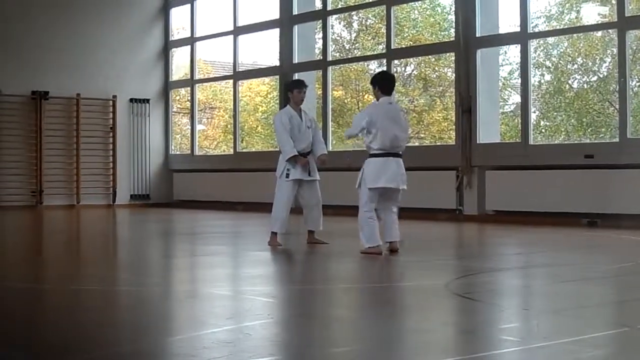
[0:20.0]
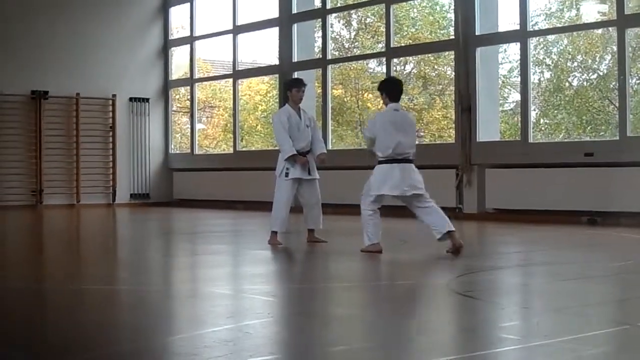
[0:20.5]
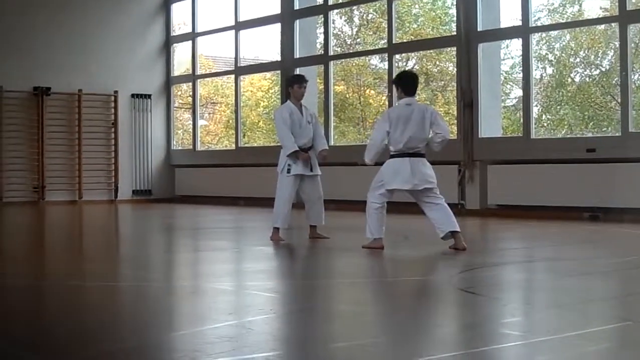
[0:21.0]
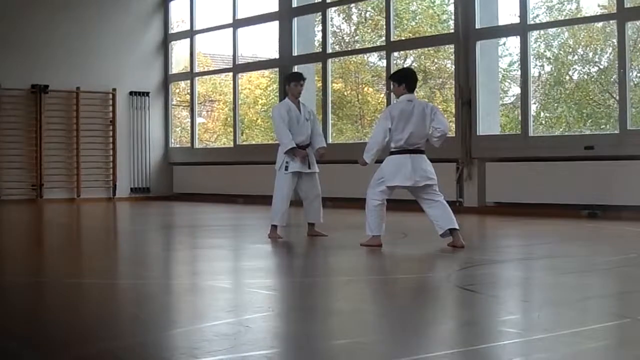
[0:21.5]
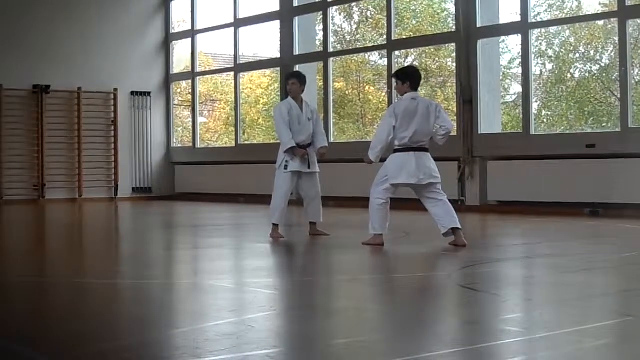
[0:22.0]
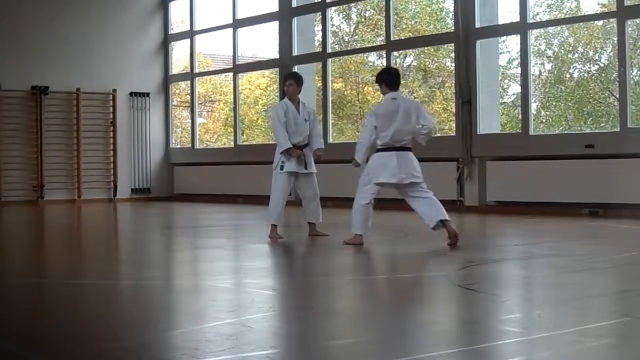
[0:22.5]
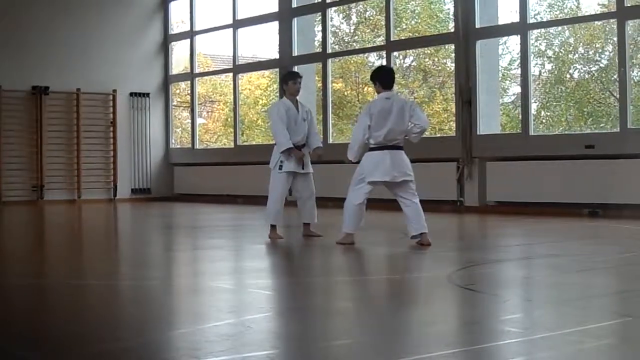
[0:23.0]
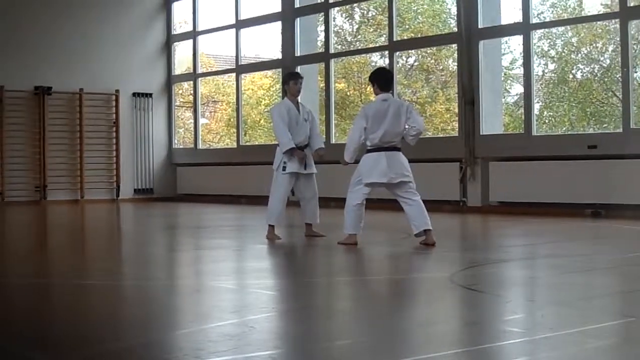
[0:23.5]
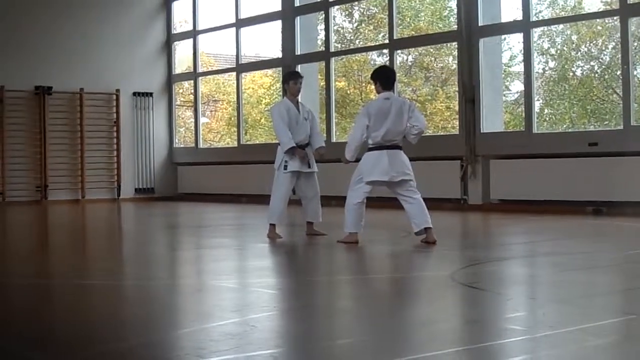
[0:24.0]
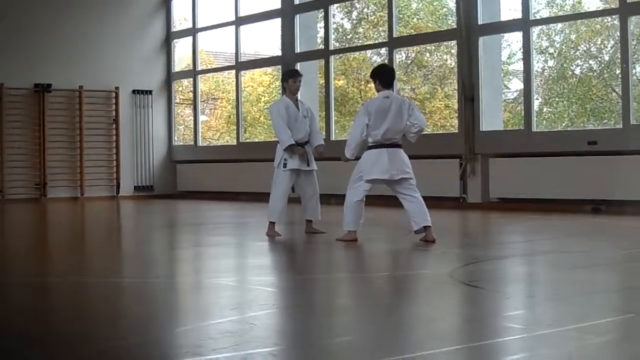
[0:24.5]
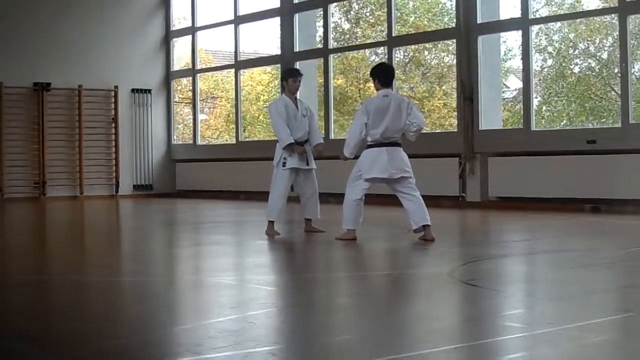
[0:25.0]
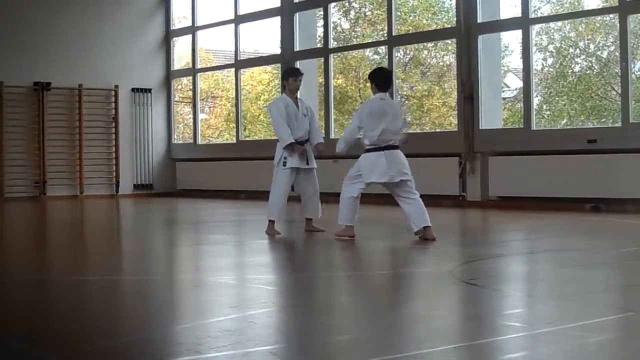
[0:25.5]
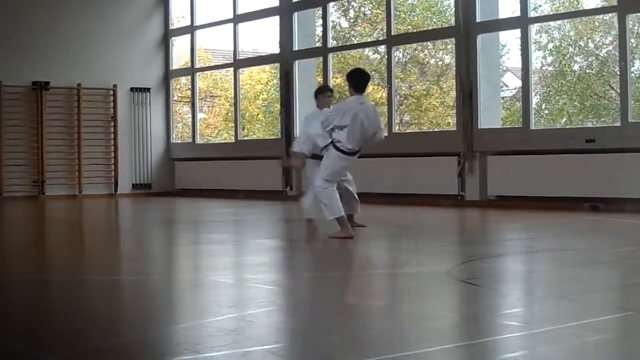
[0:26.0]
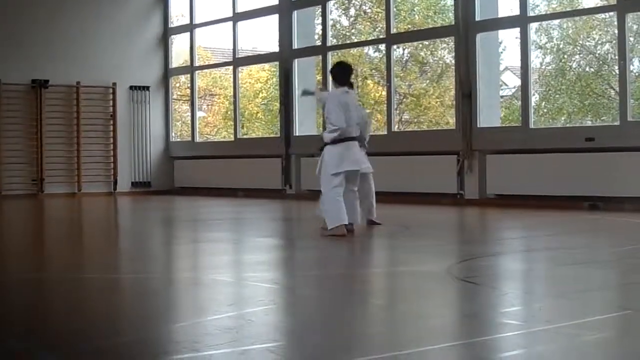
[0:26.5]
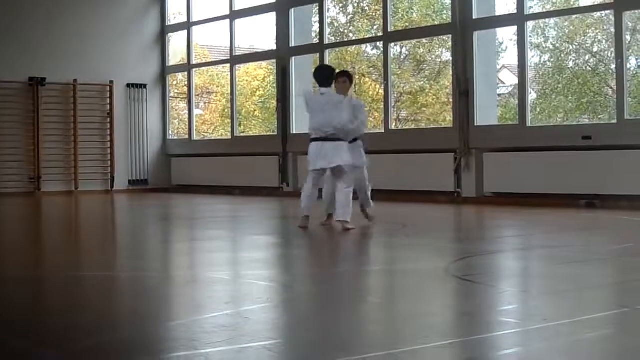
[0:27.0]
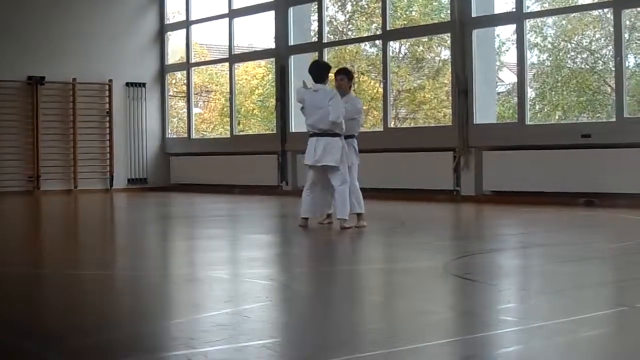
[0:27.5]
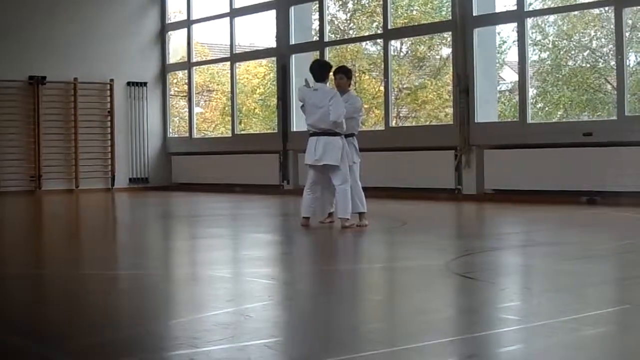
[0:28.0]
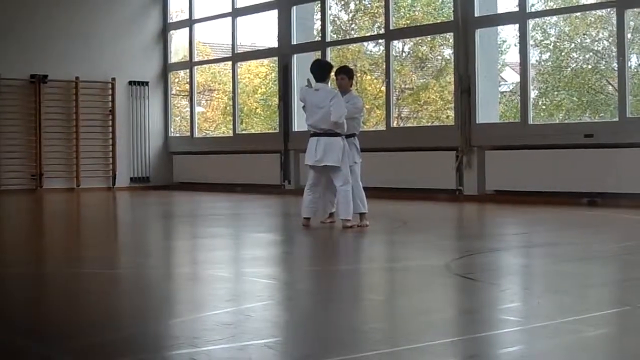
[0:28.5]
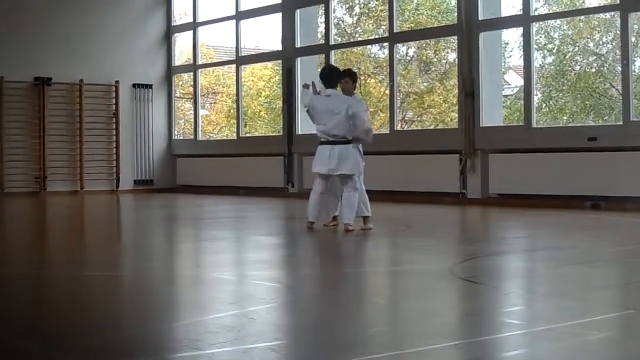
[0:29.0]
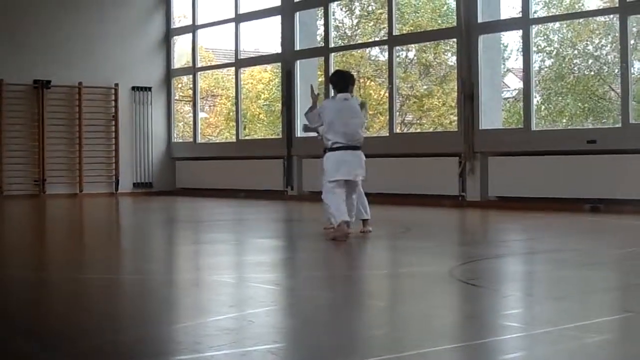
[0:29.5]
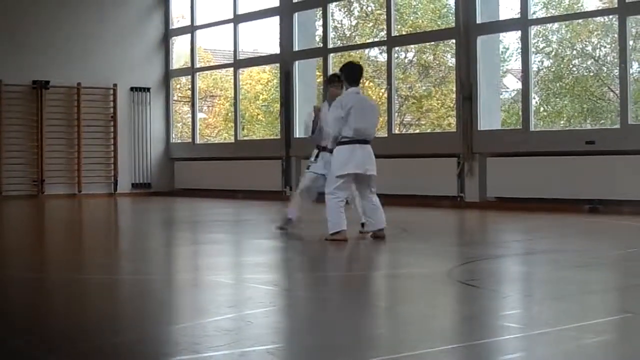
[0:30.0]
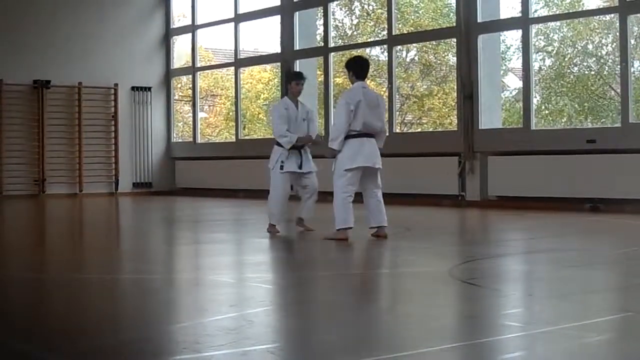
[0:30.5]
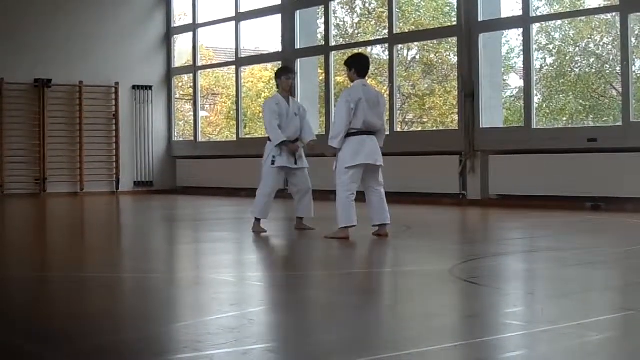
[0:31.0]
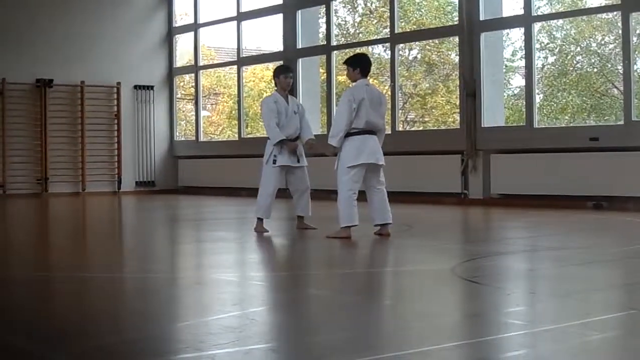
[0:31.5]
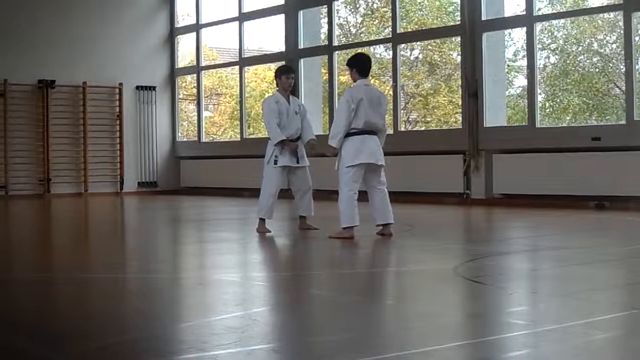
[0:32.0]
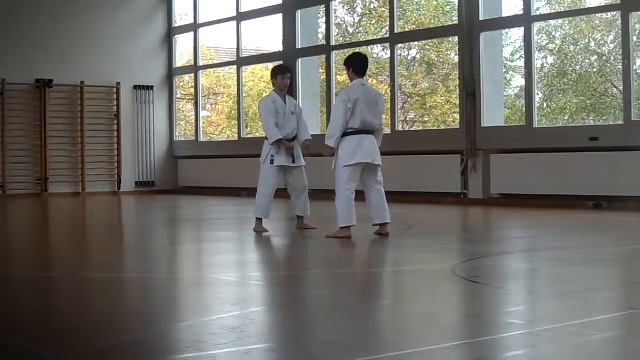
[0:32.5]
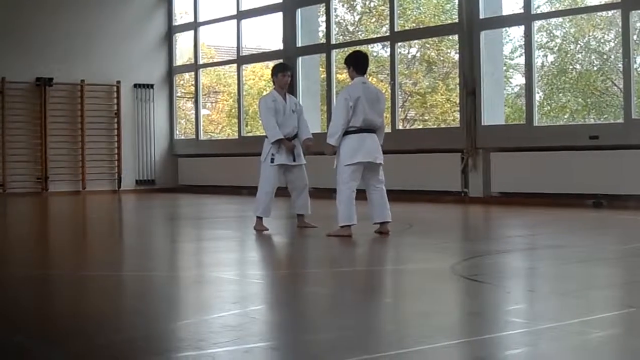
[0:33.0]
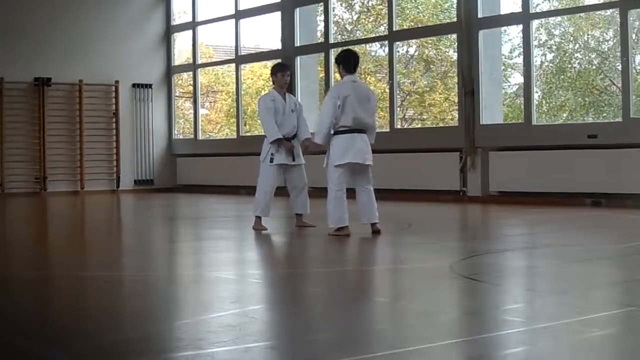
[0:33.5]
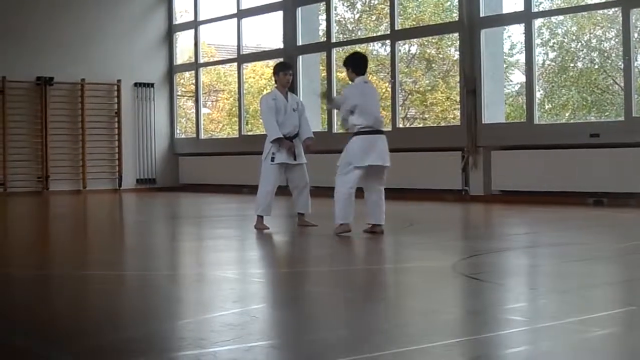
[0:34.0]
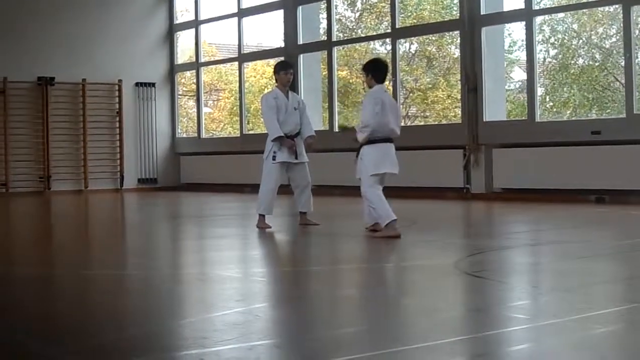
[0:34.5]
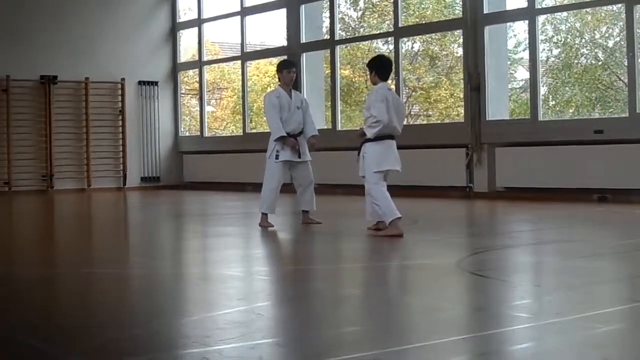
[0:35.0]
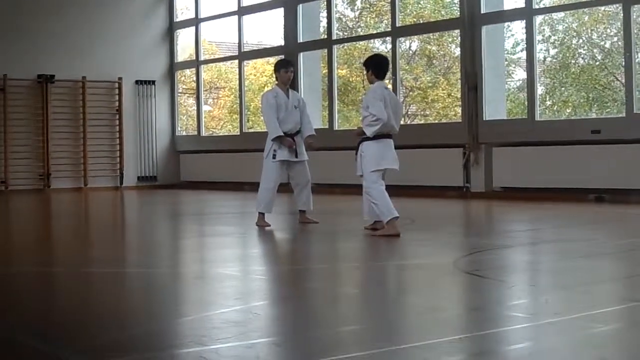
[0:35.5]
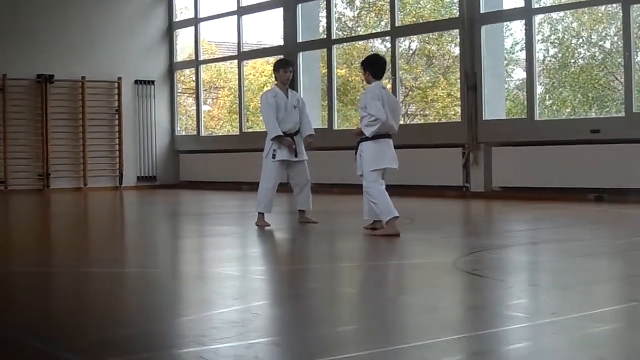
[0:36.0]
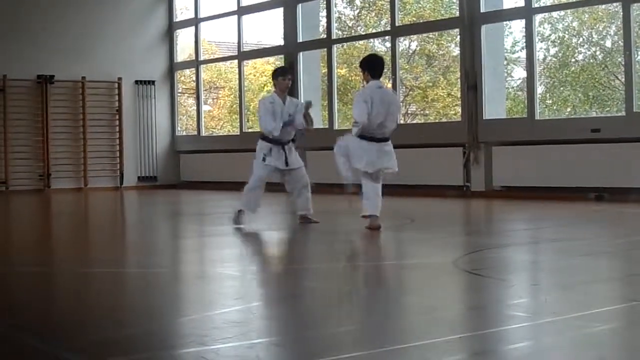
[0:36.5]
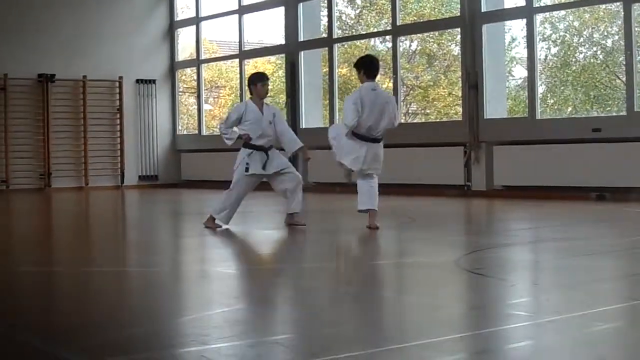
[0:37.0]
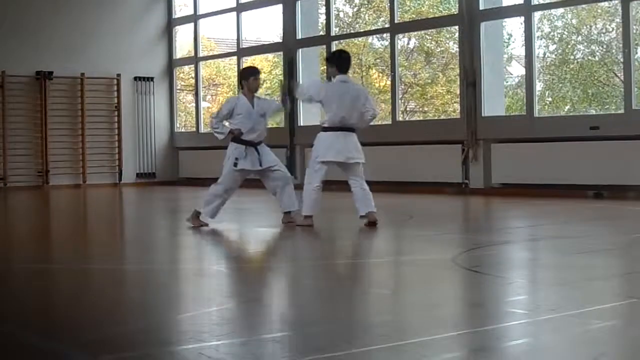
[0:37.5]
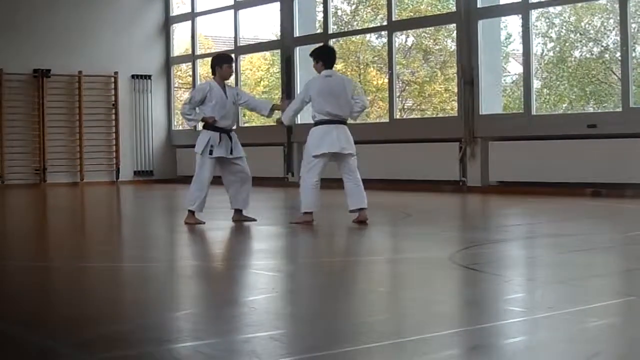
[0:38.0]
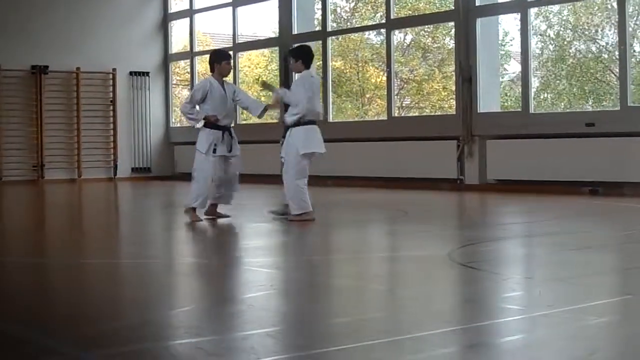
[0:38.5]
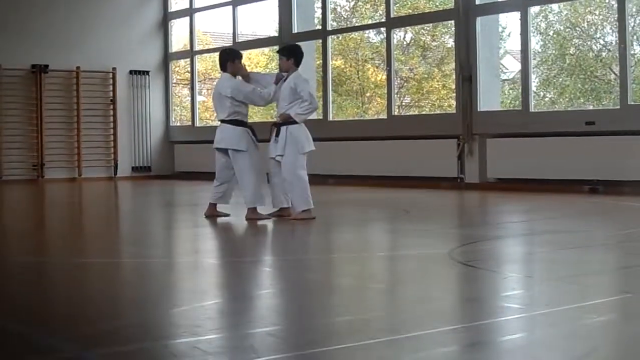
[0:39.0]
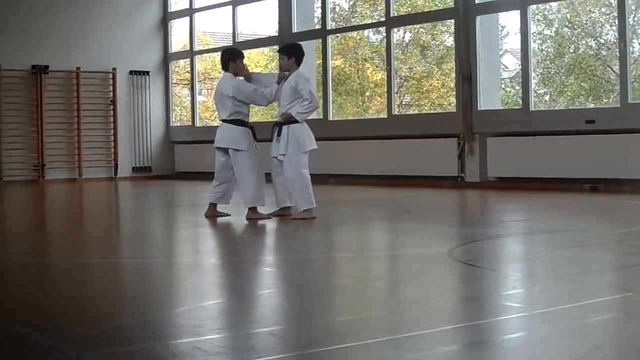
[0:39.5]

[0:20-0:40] The scene continues in the same area inside a building, sort of like a karate dojo. The wooden floor is brownish and very reflective, with the bright light from the windows gleaming off it. The walls are white. Large windows are behind the two boys in the middle. Outside the windows it is daytime, with a very bright white sky, and large trees poke outside the window with mostly green leaves and some yellowish leaves. The two boys in the middle wear white outfits with black belts and no shoes, and they have short black hair. The boy on the right gets ready to perform a move, and before they start they look to the left at somebody off camera. The boy on the right then lifts his leg up a little more quickly while the boy on the left seems to dodge and block the attack. The boy on the right throws some punches while the boy on the left appears to continue to sort of dodge and show how to block them. They return to their original positions. The boy on the right gets into the same fighting position once more as the boy on the left prepares for the attack, and this time the boy on the right strikes more slowly while the boy on the left shows how to protect and dodge.